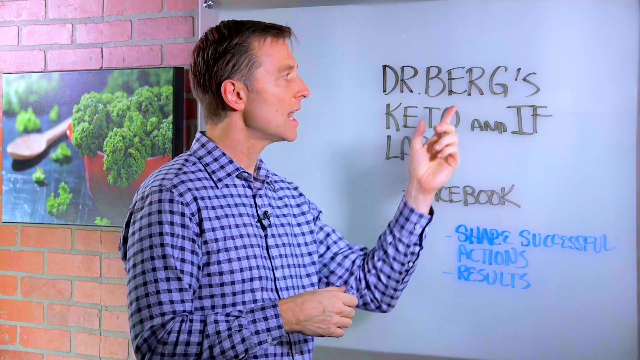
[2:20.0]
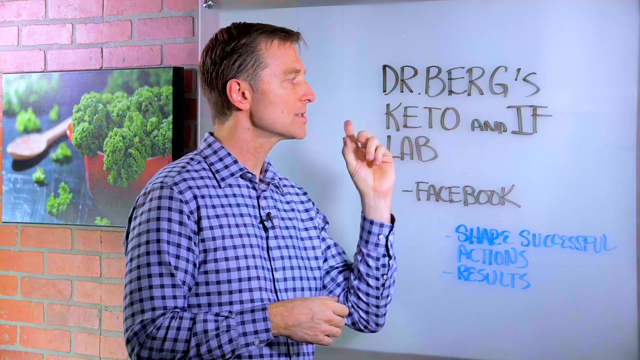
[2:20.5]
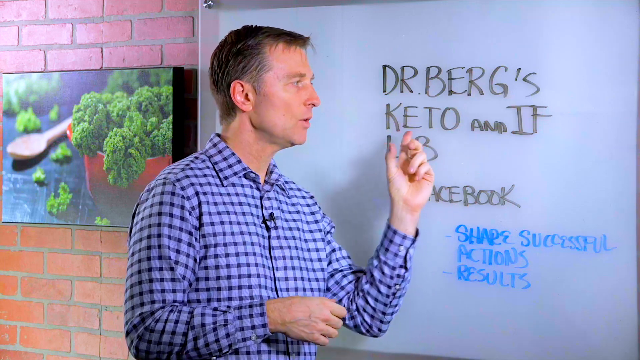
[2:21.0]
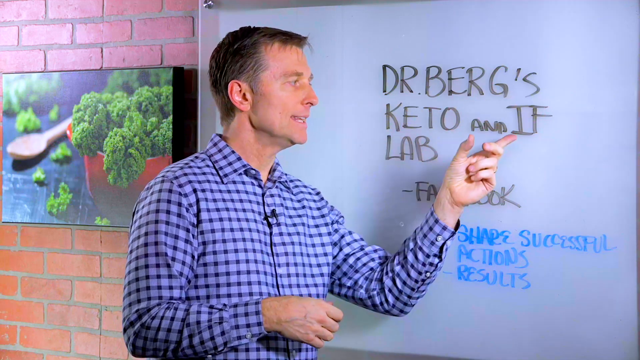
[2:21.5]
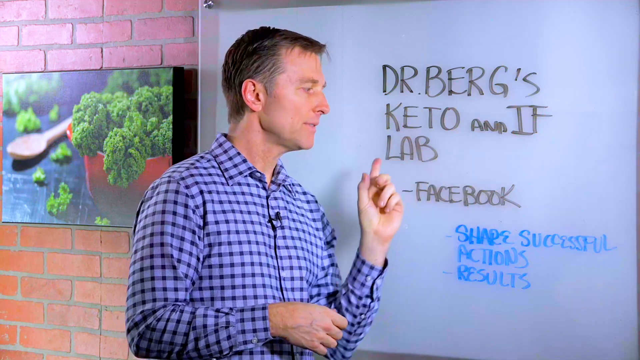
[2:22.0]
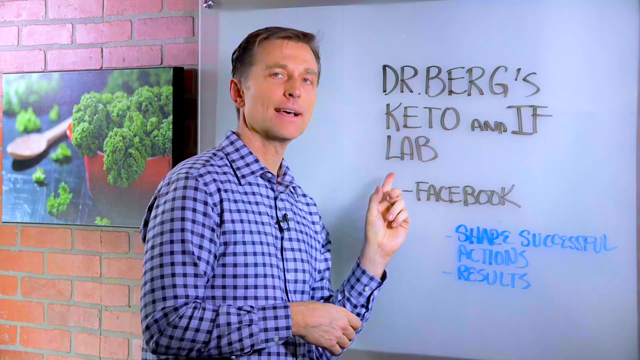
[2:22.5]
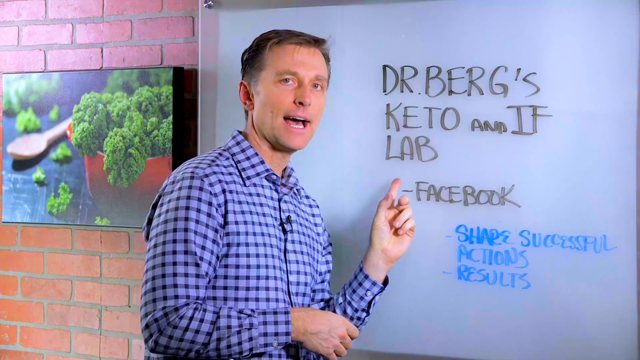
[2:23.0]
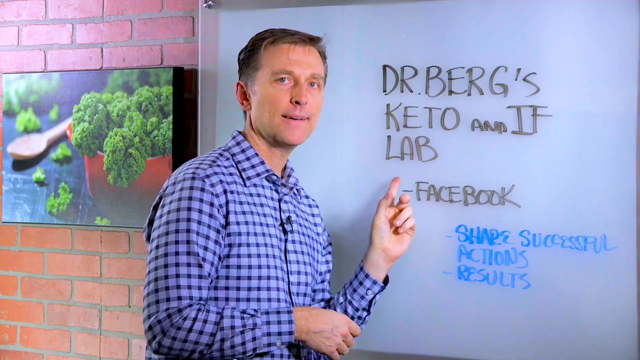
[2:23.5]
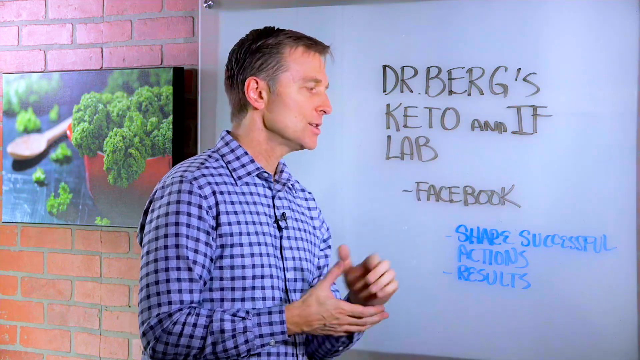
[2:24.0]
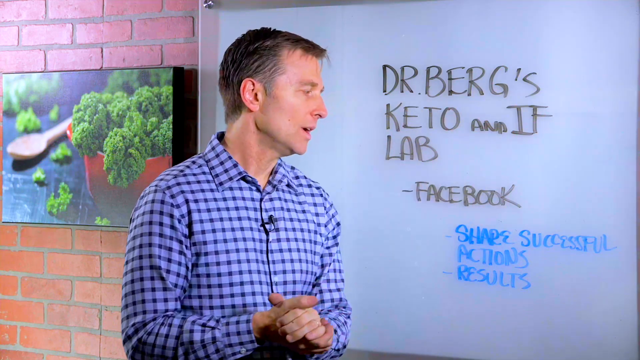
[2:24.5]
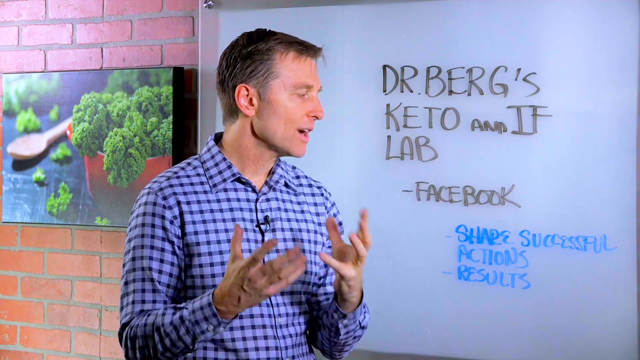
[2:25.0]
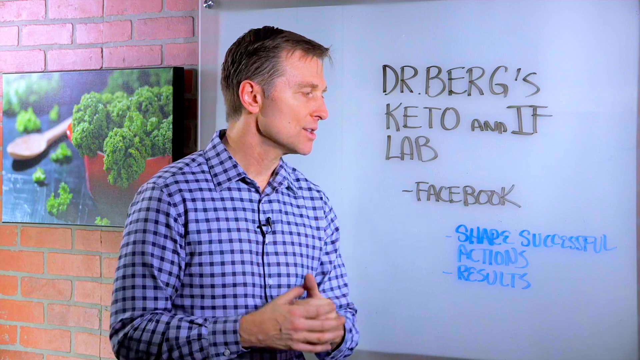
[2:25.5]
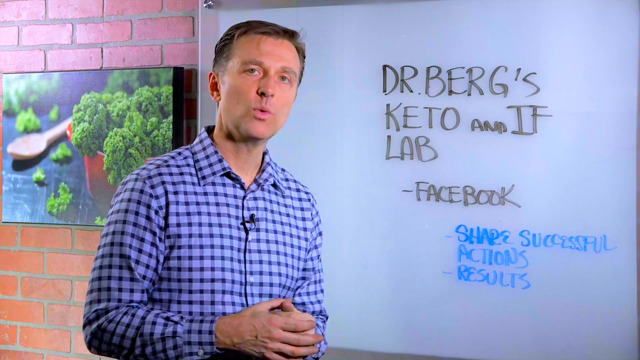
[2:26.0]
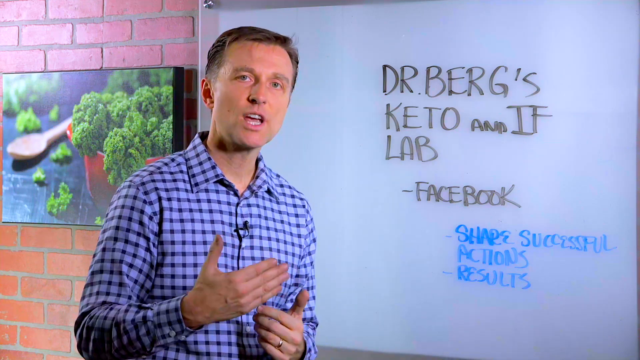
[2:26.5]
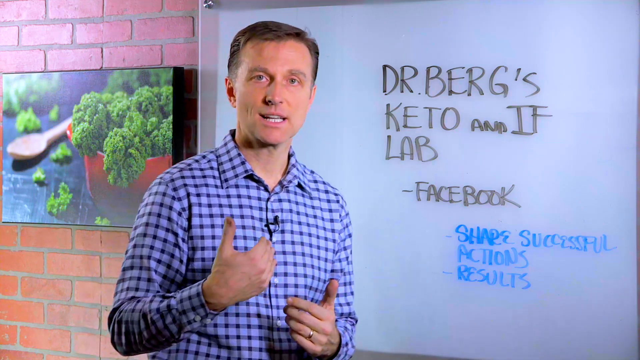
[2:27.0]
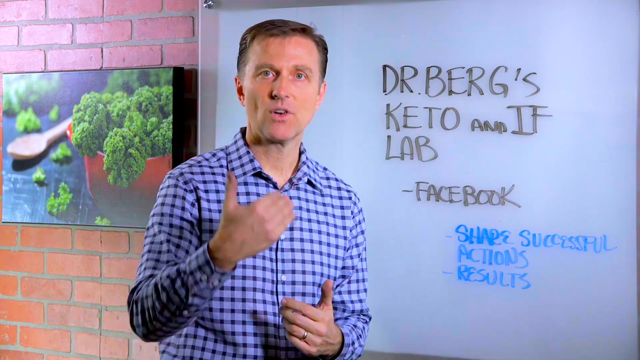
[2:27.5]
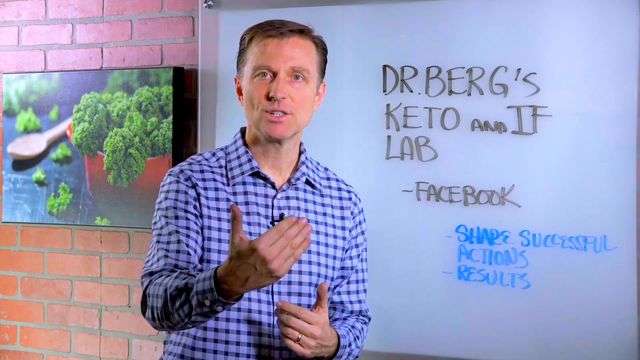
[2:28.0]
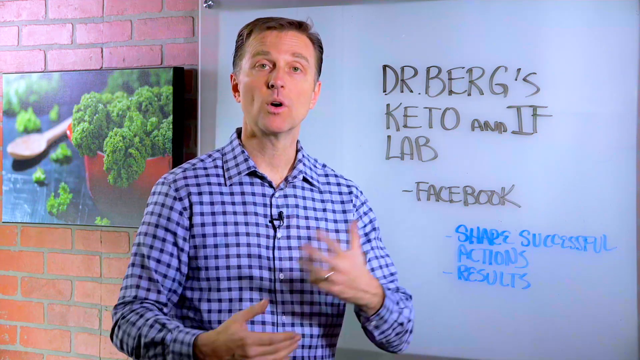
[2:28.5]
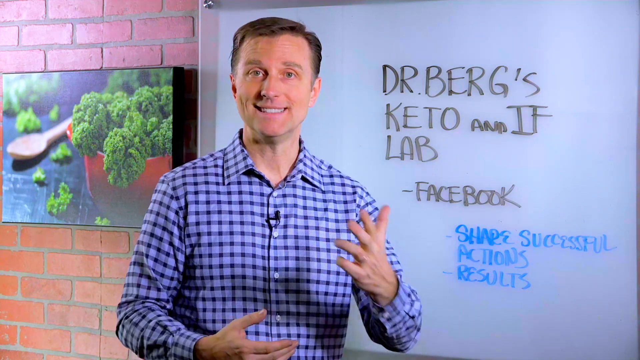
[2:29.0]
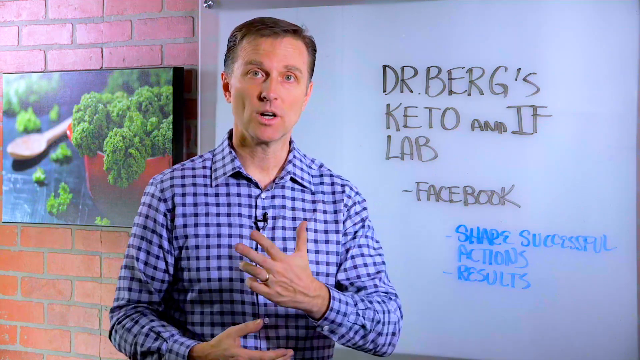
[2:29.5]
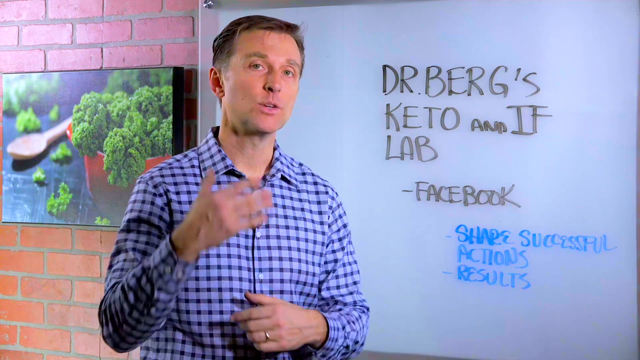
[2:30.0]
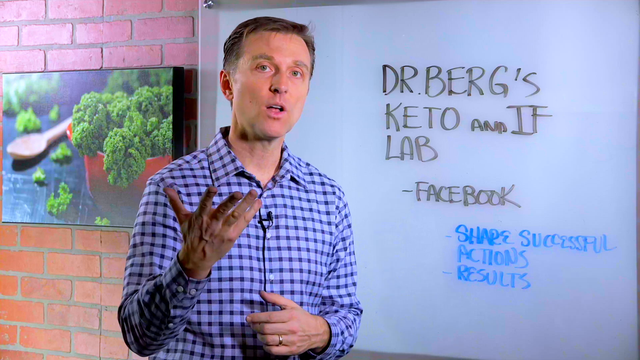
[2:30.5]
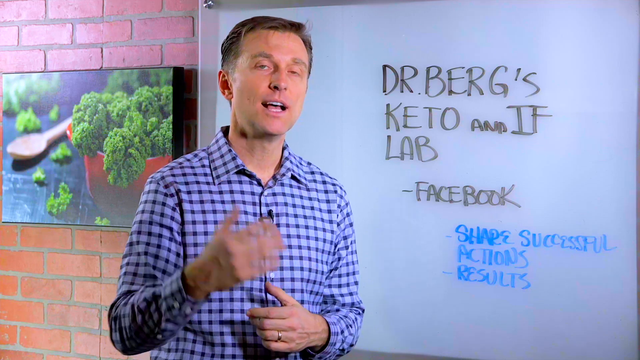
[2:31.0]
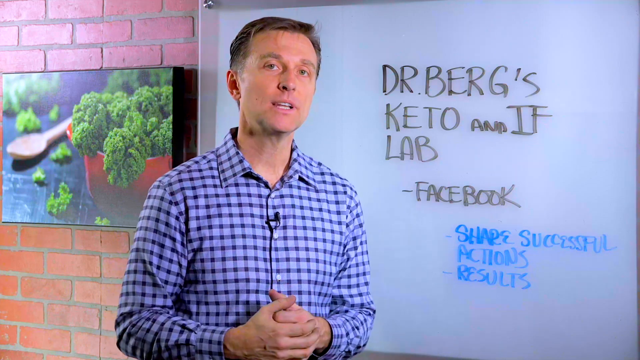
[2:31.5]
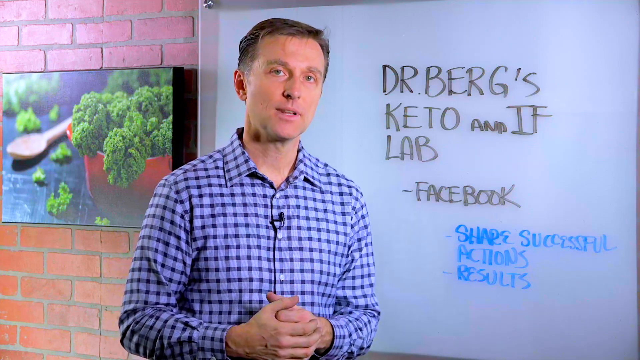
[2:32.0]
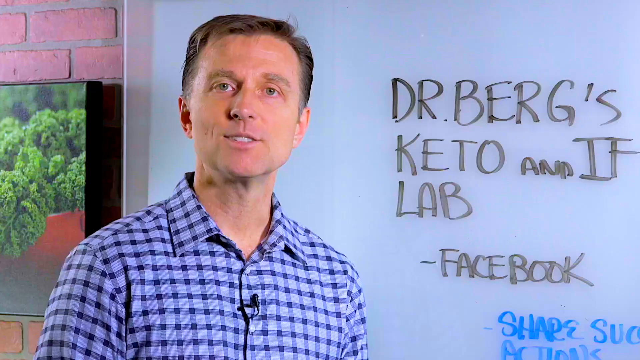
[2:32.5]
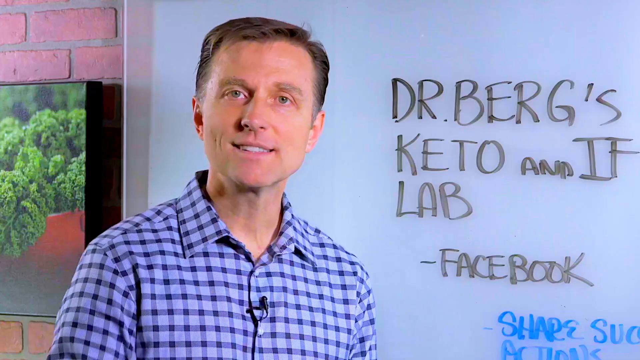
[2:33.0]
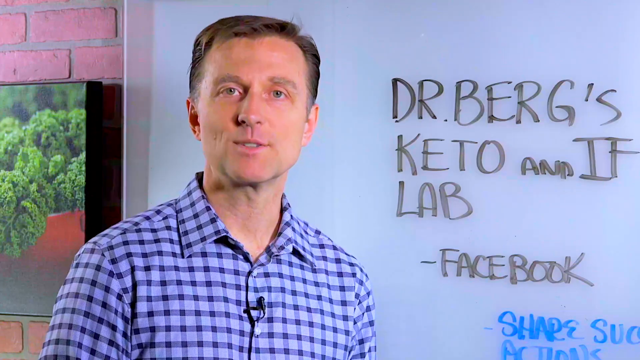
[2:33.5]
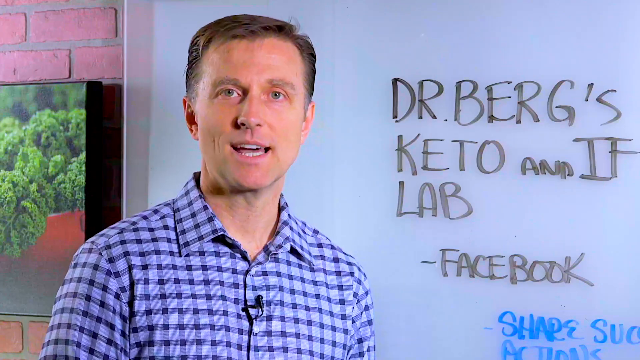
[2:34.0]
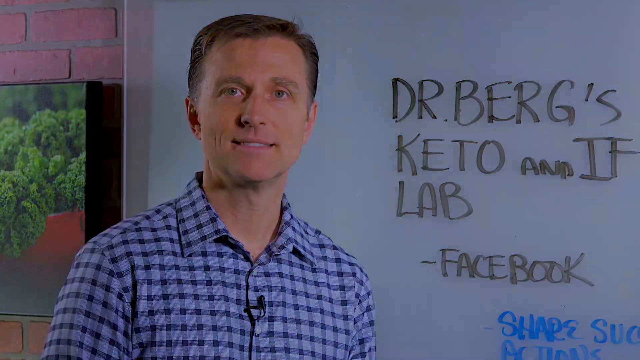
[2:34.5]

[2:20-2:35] The setting has a brick wall background with a portrait of salad in a bowl or pot on a black counter with a wooden spoon. The man wears a plaid shirt and has a microphone. The board behind him reads "Dr. Berg's Keto and IF Lab" in black text, with the word "Facebook" underneath, also in black. To the right is blue text that reads "Share Successful Actions Results." The doctor speaks directly to the camera, using his hands at certain points. The camera pulls in to a tighter shot, then back out to show the full board. He turns toward the board as though pointing out portions of the words, without any marker in hand. The shot pulls tighter to his face, he appears to give a farewell gesture with his hands, and the video ends.